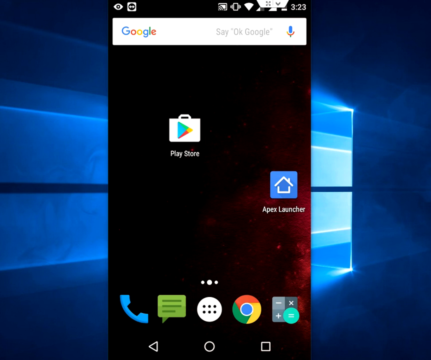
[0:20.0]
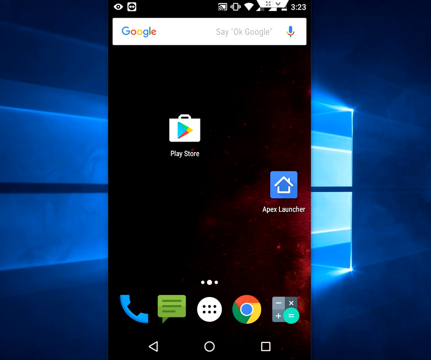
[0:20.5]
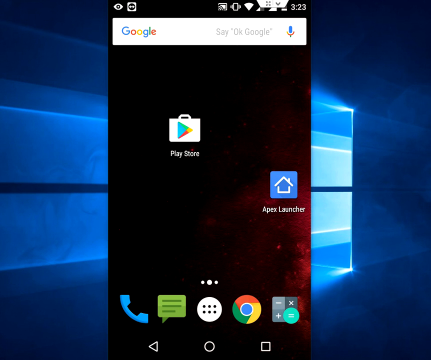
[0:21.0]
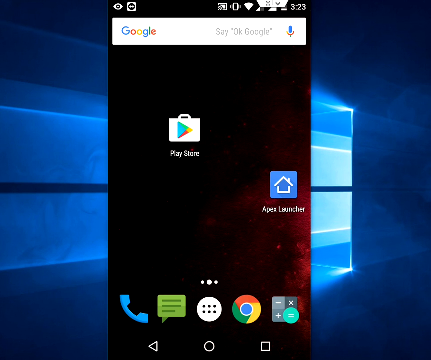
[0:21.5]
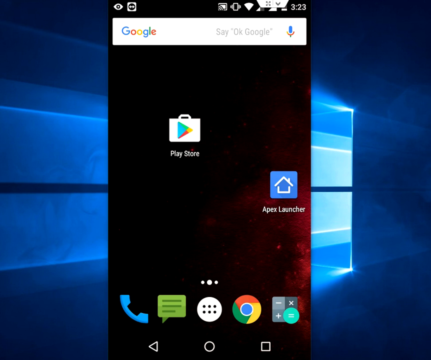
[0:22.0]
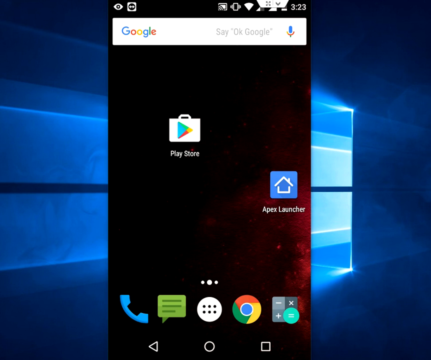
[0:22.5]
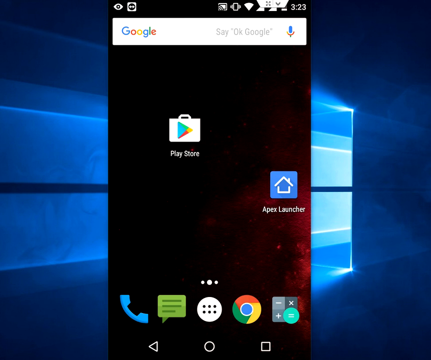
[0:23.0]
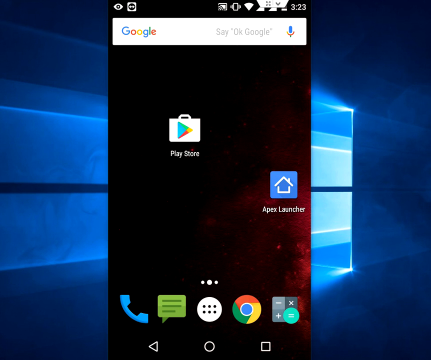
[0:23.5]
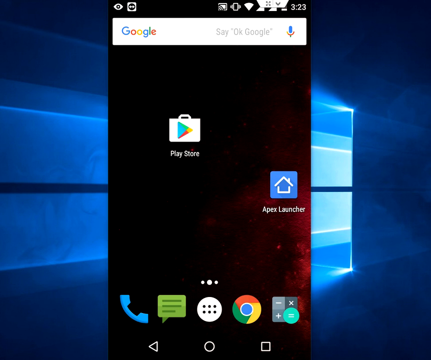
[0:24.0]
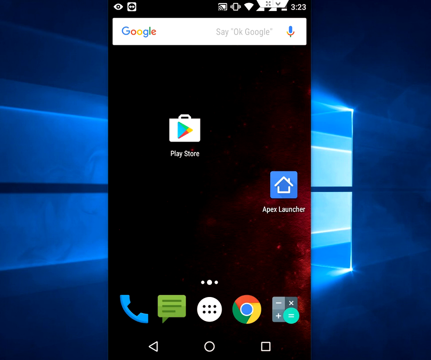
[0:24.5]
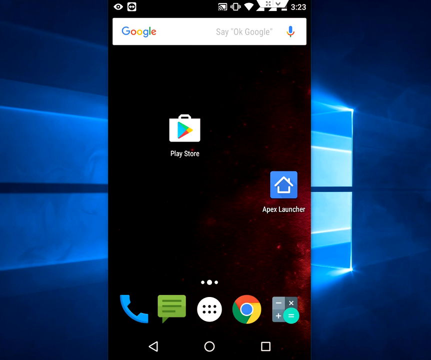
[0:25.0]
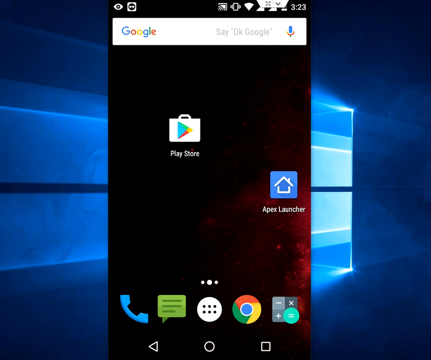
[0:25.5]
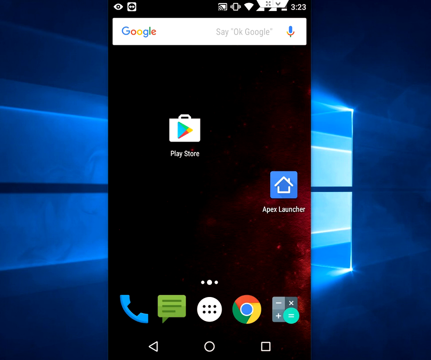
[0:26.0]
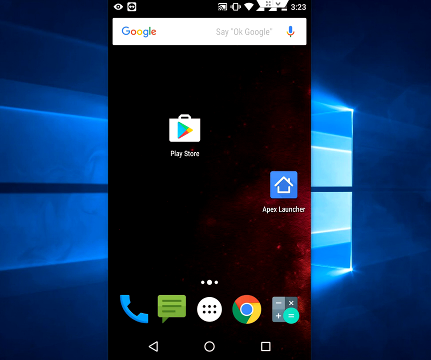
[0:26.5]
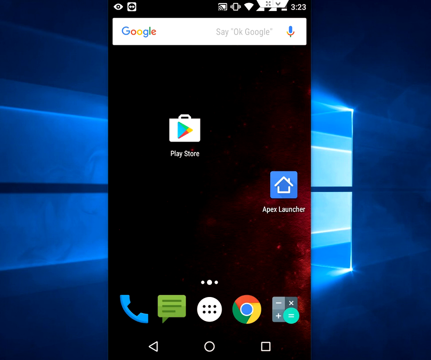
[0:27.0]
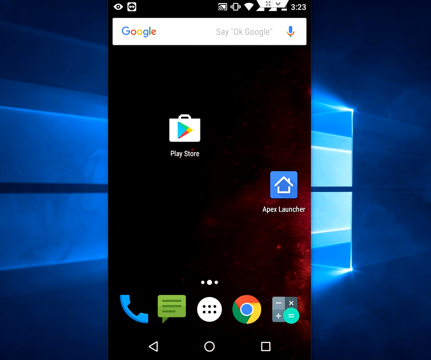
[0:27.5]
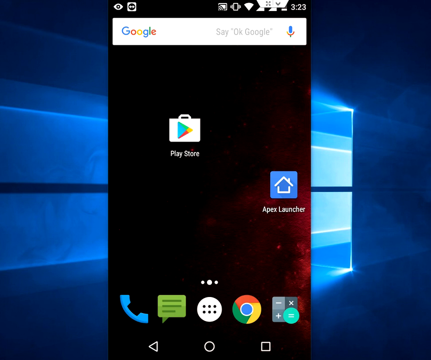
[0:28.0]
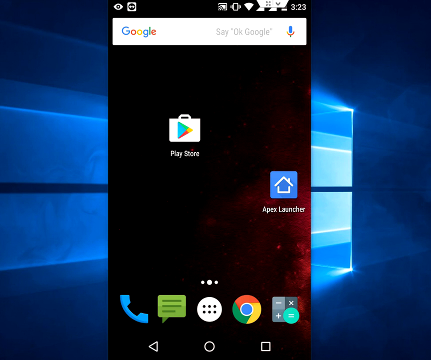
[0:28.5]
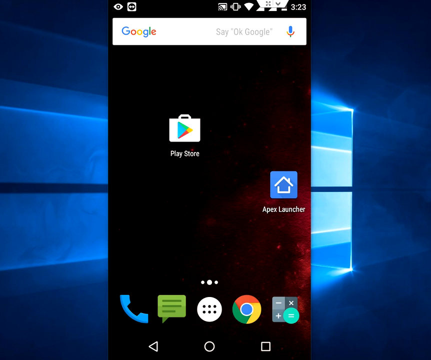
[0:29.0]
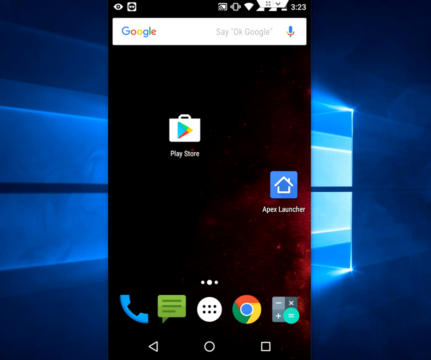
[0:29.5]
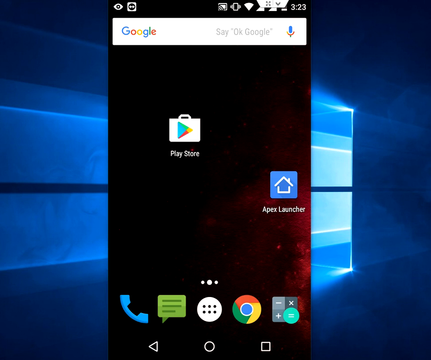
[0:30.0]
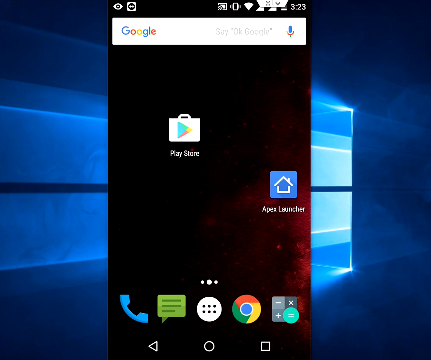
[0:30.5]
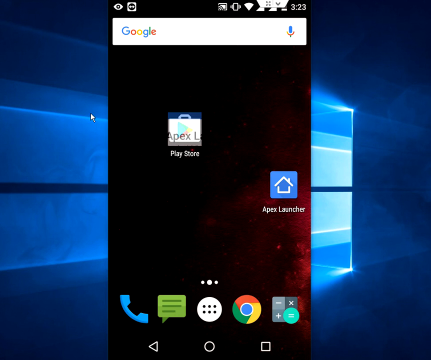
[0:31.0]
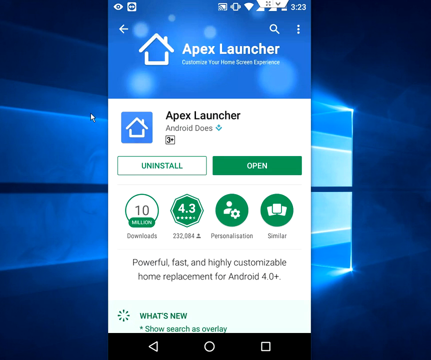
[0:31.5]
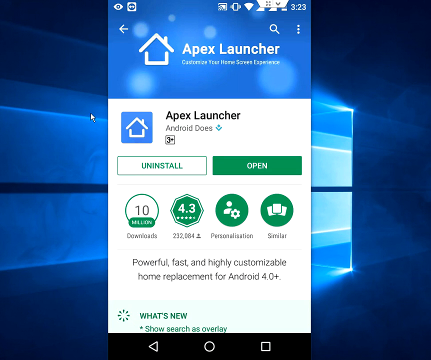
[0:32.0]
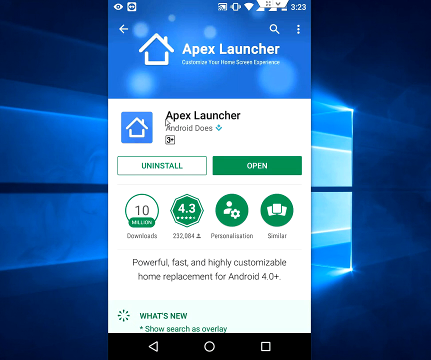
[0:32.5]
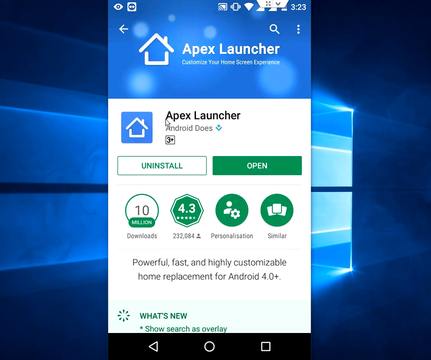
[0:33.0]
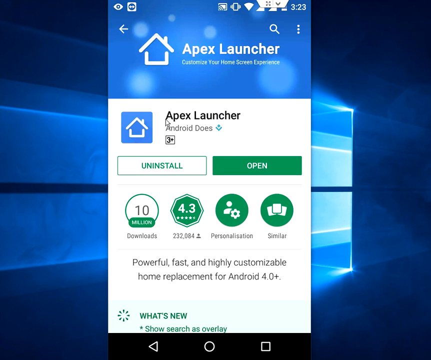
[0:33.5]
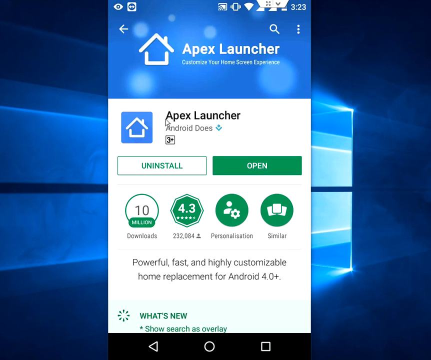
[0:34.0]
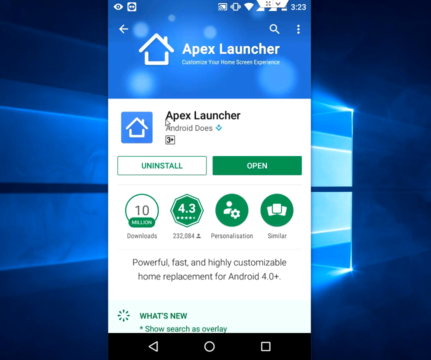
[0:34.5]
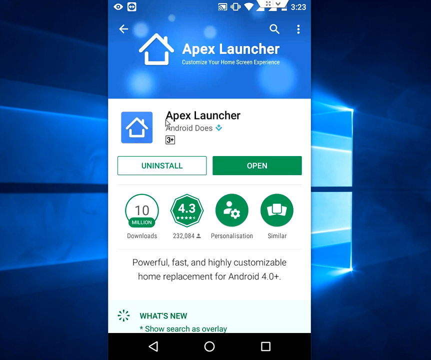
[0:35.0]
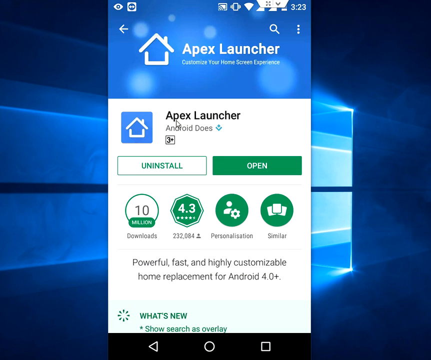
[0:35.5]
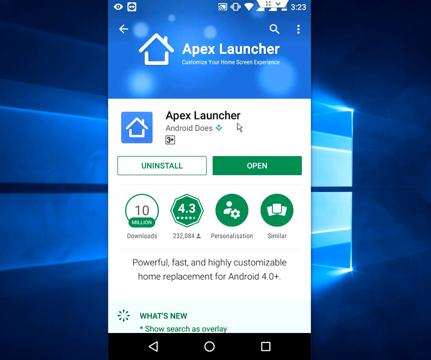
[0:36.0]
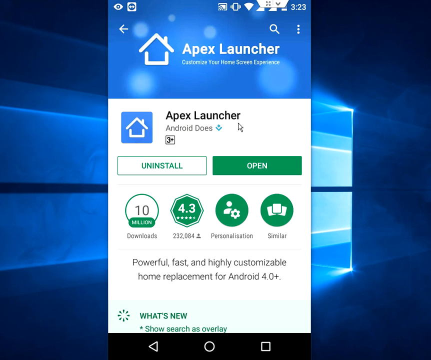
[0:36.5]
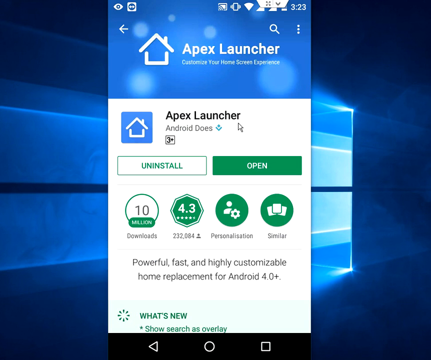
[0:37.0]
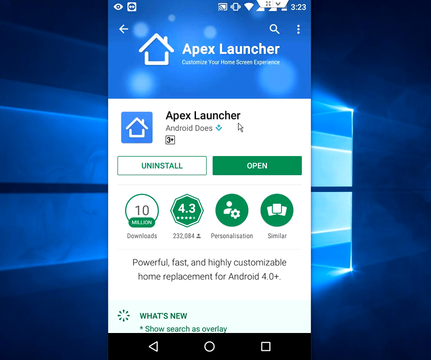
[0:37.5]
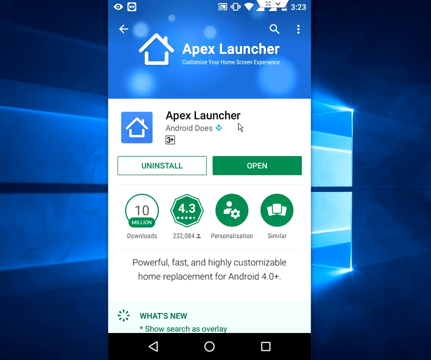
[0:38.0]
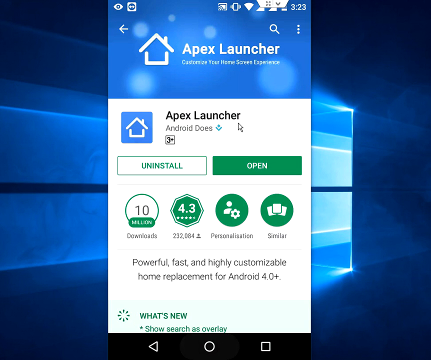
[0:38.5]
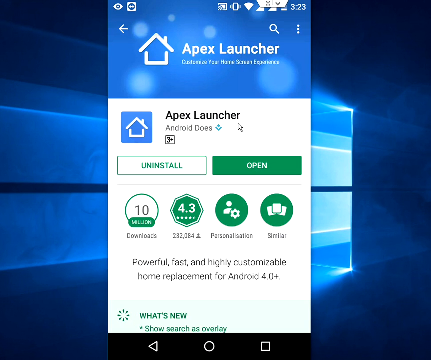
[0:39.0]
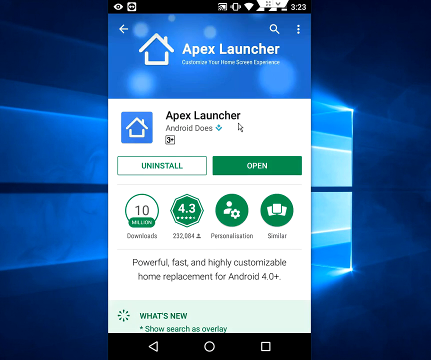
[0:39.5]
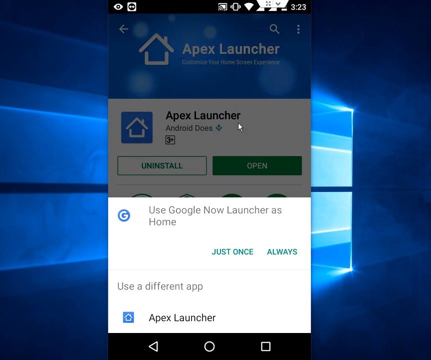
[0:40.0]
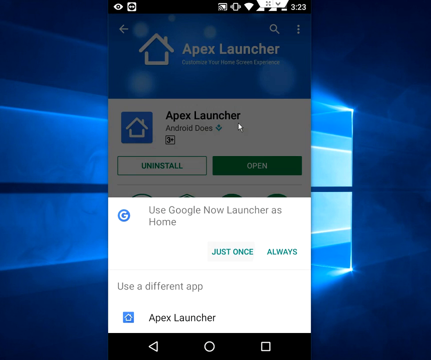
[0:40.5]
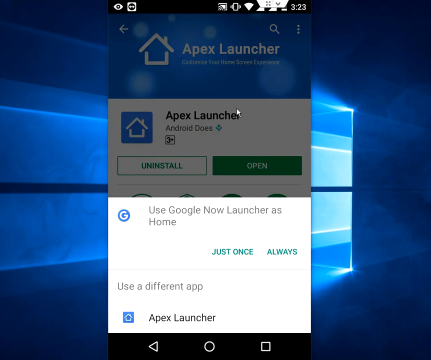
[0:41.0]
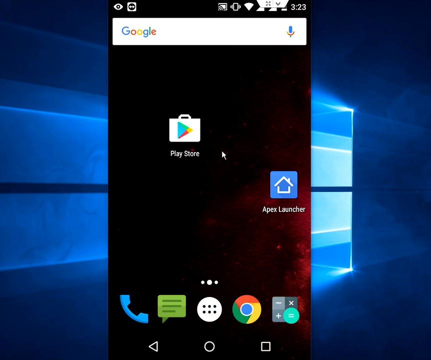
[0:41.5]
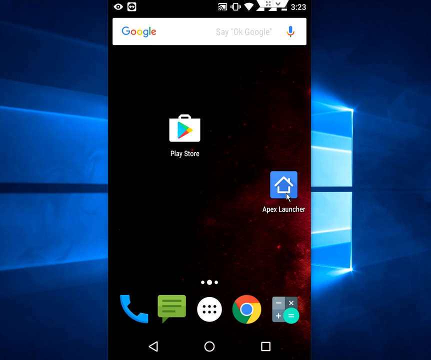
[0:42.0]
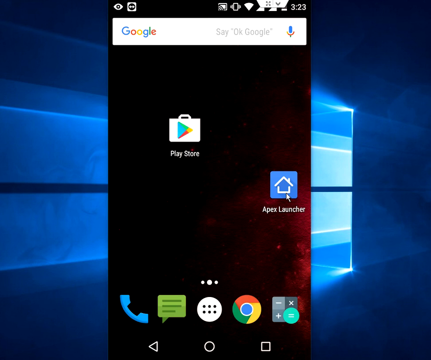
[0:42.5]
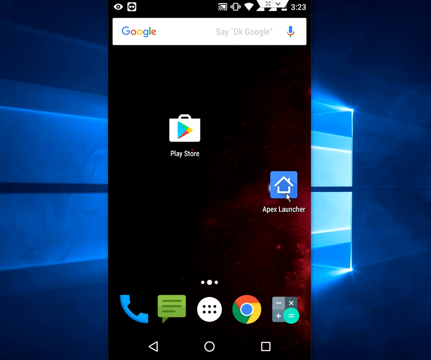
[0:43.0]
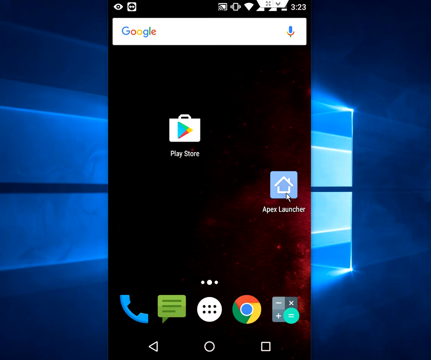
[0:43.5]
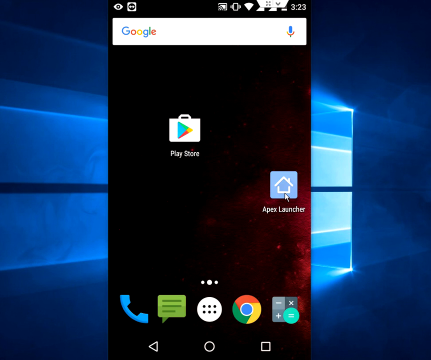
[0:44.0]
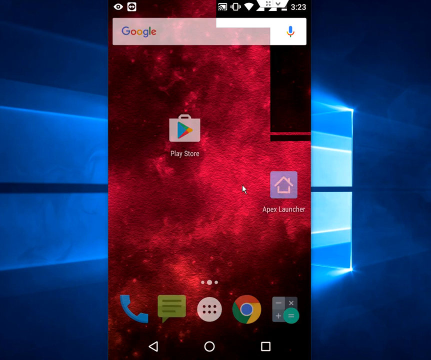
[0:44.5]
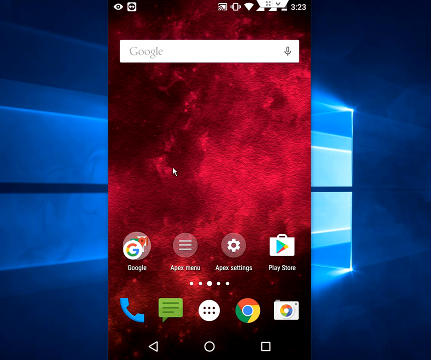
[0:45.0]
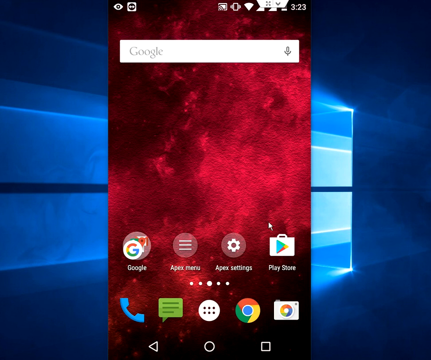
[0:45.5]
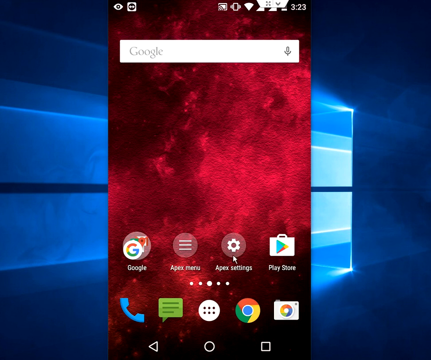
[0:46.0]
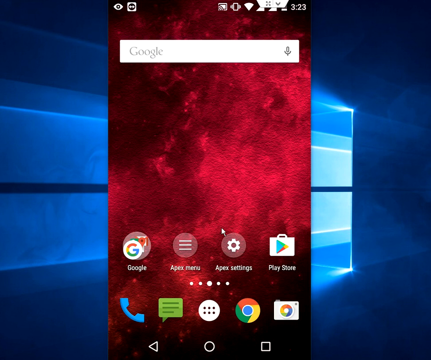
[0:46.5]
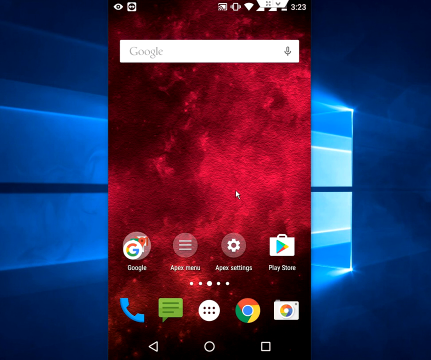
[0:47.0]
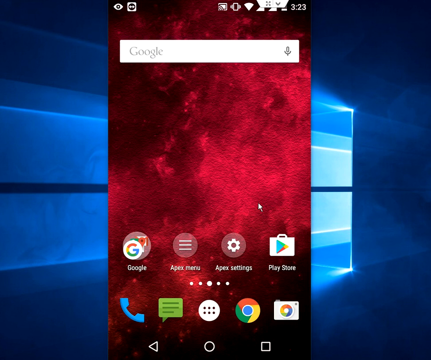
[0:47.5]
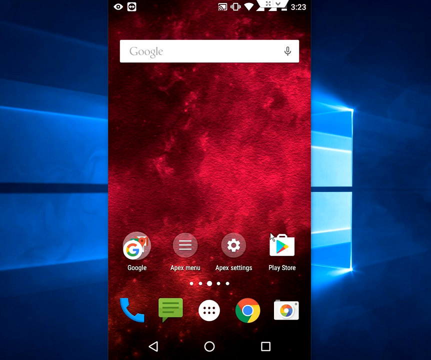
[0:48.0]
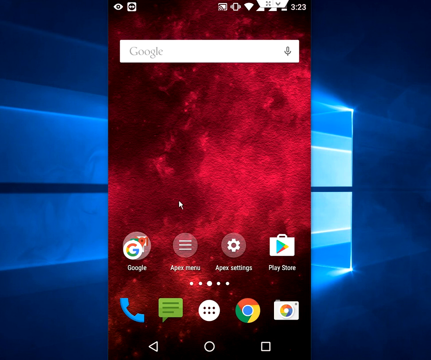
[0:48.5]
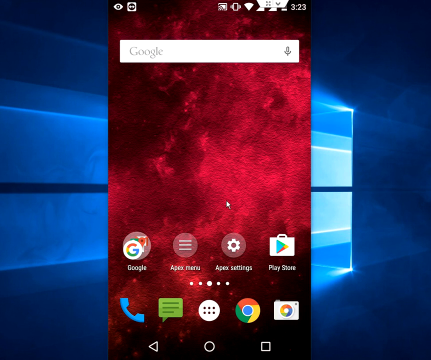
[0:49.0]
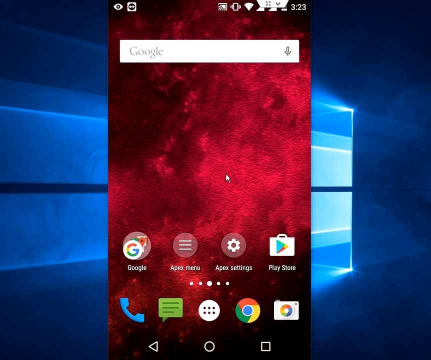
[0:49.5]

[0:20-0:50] The user is still on the main Android screen. A mouse cursor appears and clicks on Apex Launcher, opening its page. The page says "Apex Launcher", with a little arrow pointing down, and the icon is a diamond, like a flower shape. Below that it says "3+". On the left half there is an "Uninstall" option in green text inside a green box with a white background, and on the right half an "Open" option in a filled-in green box. Below that is information about the app: "10 million downloads" on the left, a "4.3" star rating with "232,084 reviews", a personalization option shown as a human figure with a gear beside him, and an option to look for similar apps shown as three white cards inside a circle. Below that it reads "powerful, fast, and highly customizable home replacement for Android 4.0 plus", followed by a "what's new" section whose only visible bullet says "show search as overlay". The user opens the app, and a prompt appears saying "use Google Now Launcher as home" with the options "just once" and "always". The user chooses "just once", goes back to the main screen, and switches over to showing the apps. A different home screen appears, apparently slid over, with items reading "Google", "Apex Menu", "Apex Settings", and "Play Store".